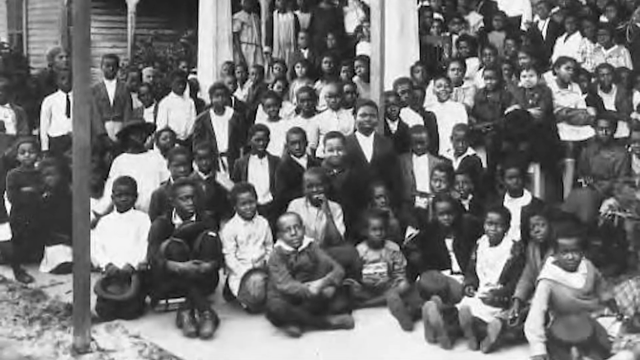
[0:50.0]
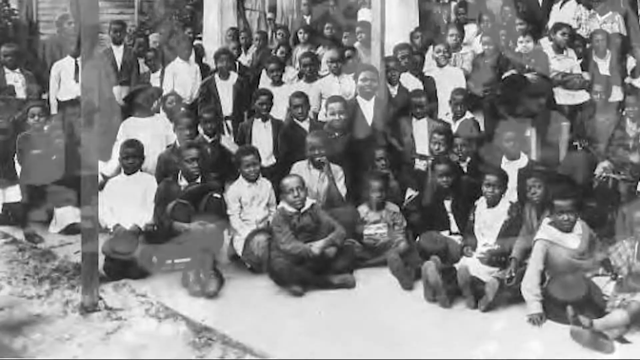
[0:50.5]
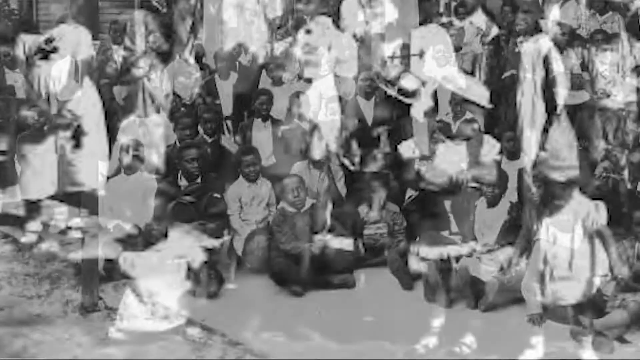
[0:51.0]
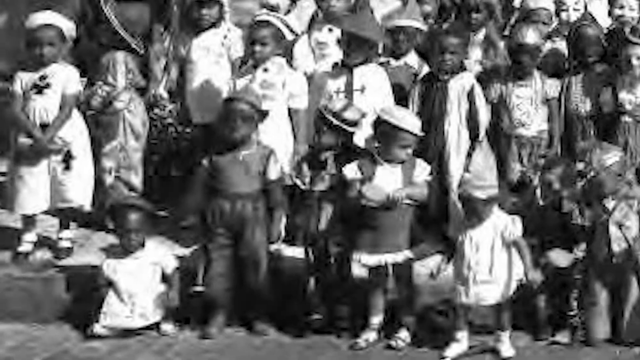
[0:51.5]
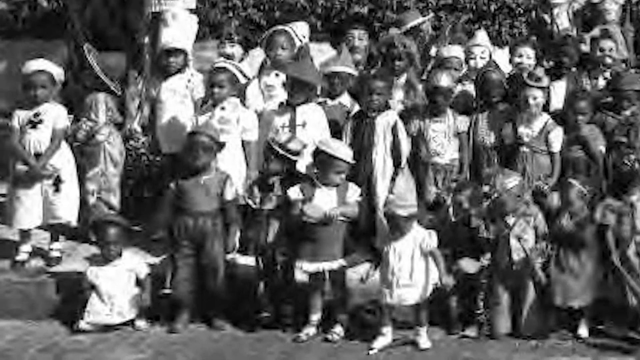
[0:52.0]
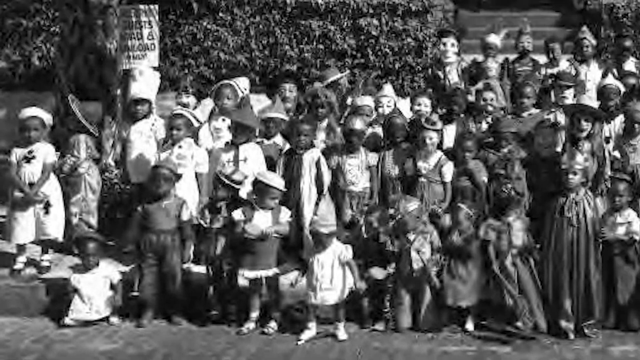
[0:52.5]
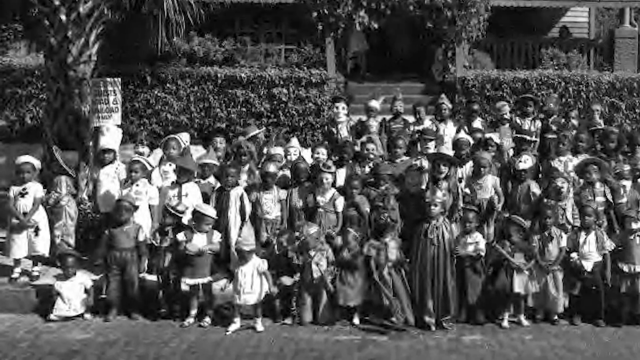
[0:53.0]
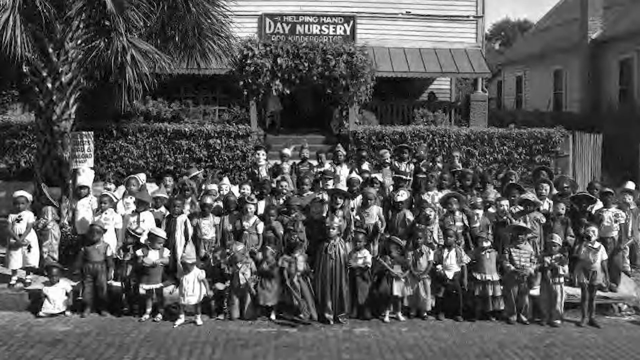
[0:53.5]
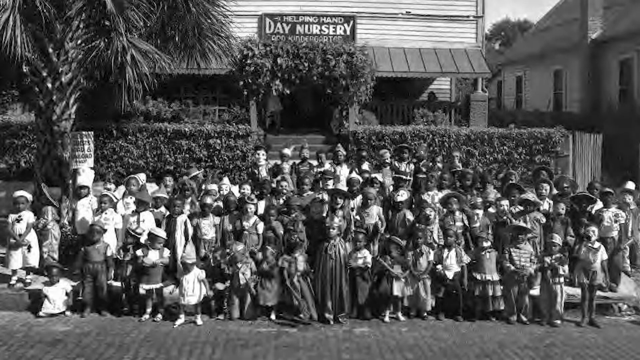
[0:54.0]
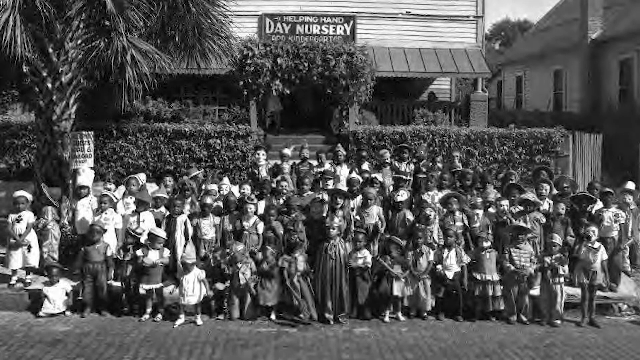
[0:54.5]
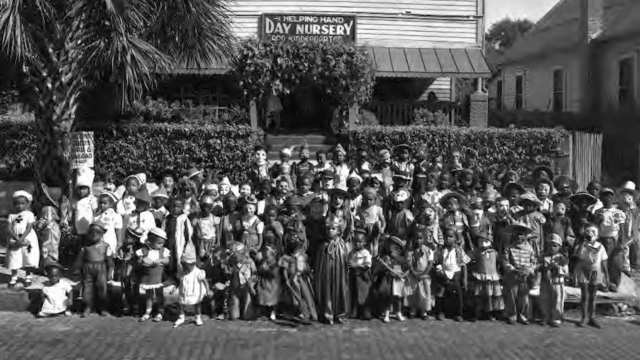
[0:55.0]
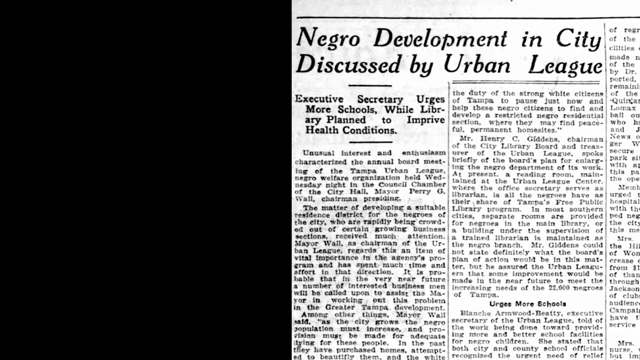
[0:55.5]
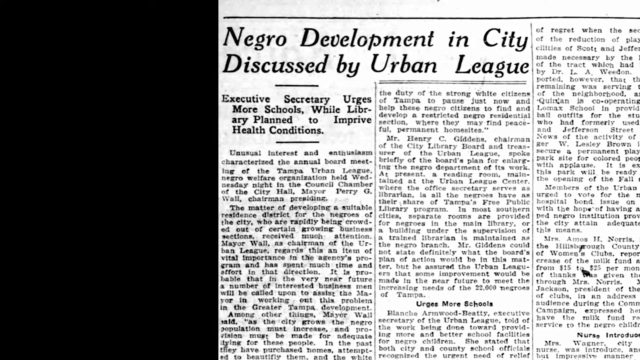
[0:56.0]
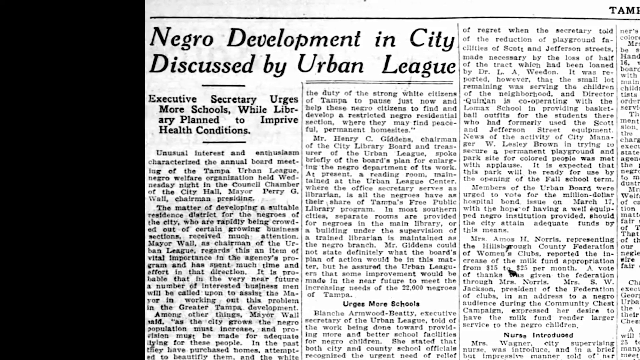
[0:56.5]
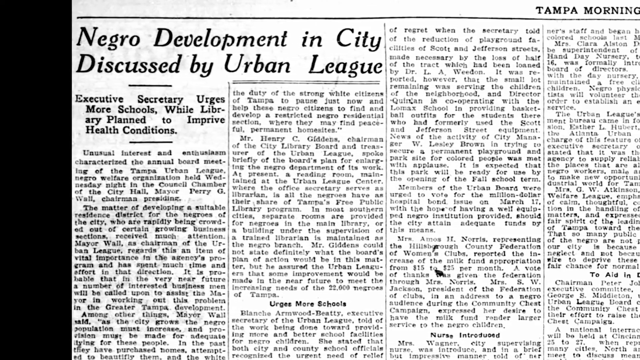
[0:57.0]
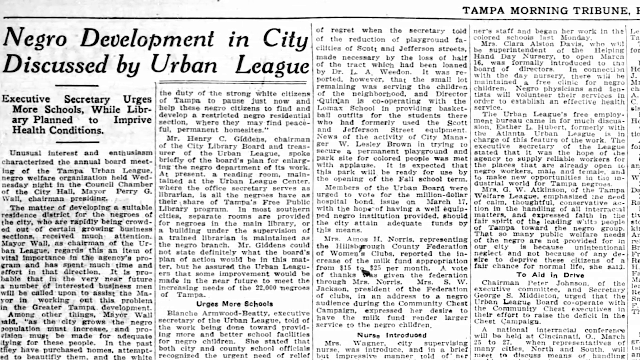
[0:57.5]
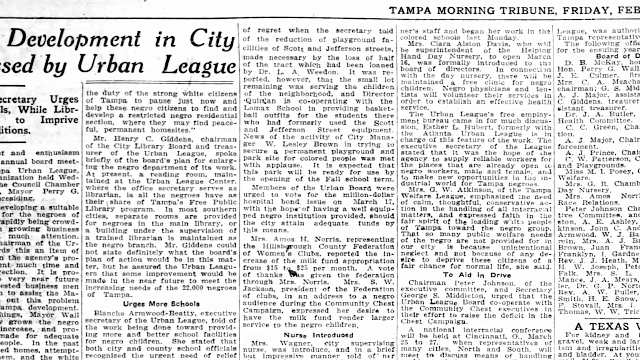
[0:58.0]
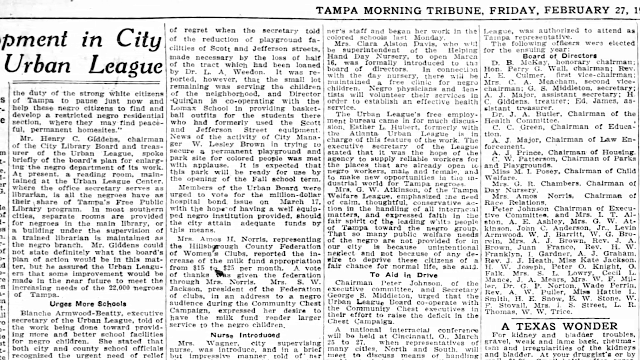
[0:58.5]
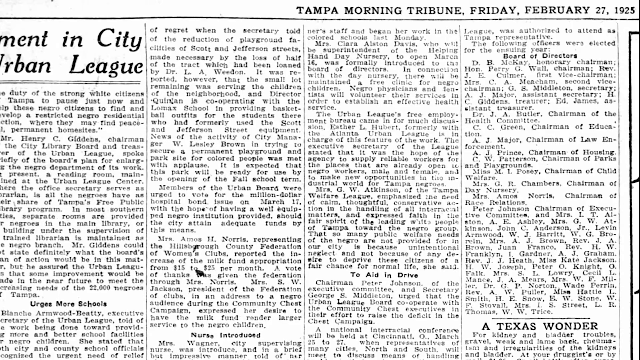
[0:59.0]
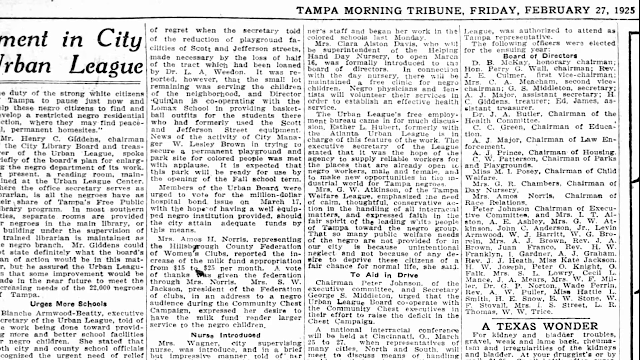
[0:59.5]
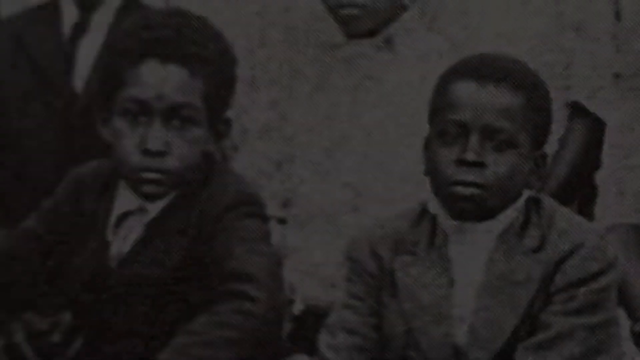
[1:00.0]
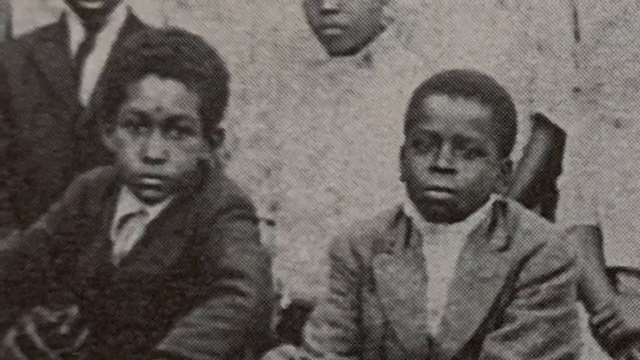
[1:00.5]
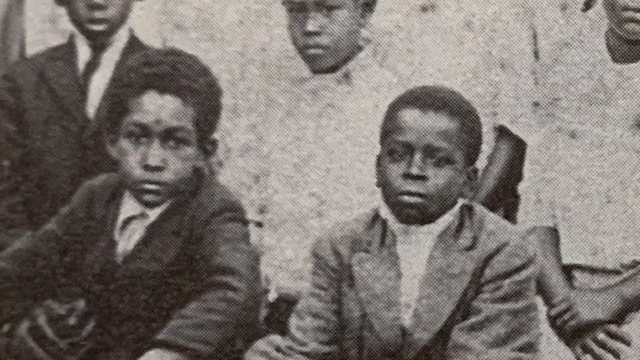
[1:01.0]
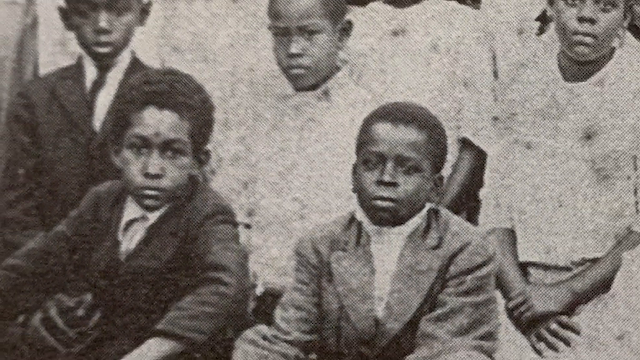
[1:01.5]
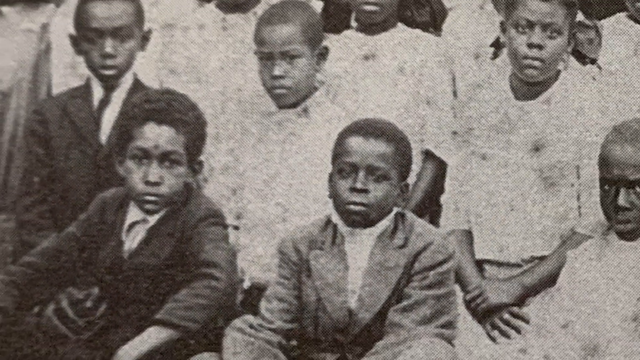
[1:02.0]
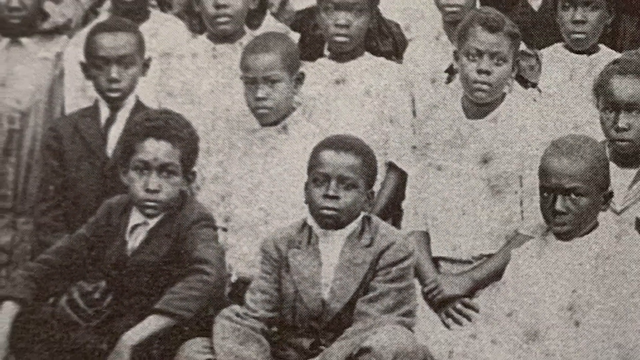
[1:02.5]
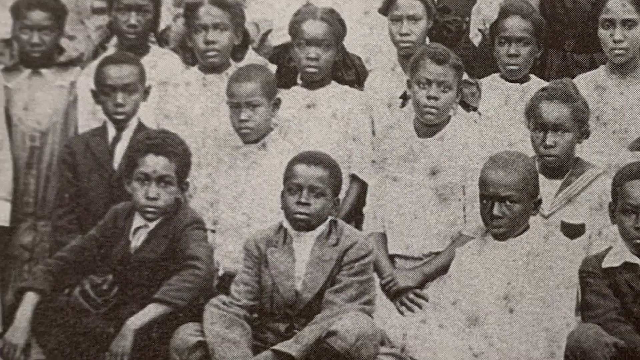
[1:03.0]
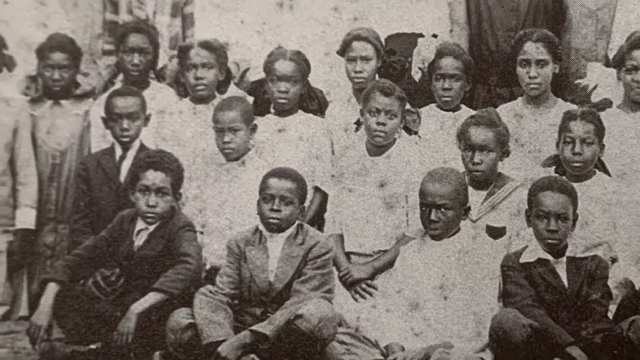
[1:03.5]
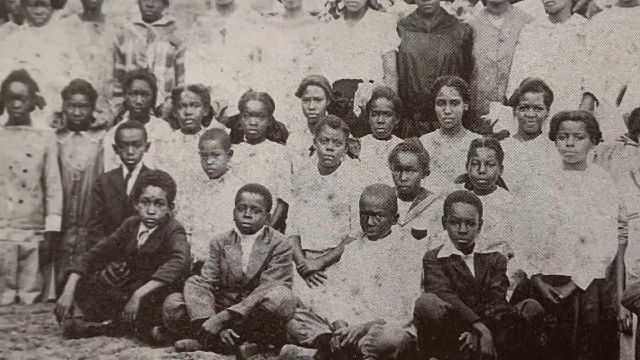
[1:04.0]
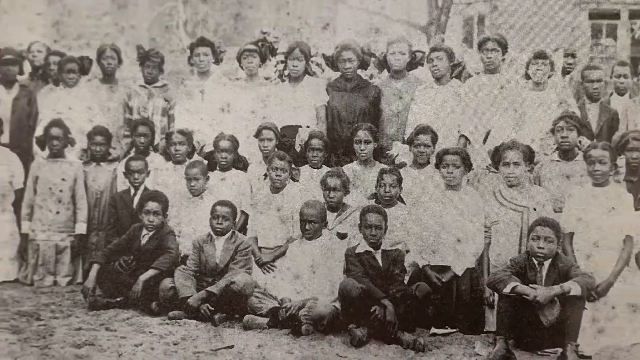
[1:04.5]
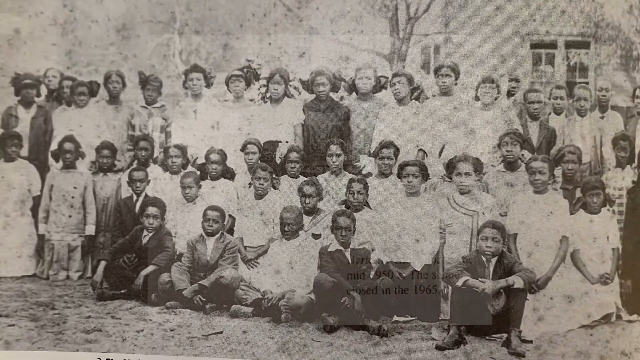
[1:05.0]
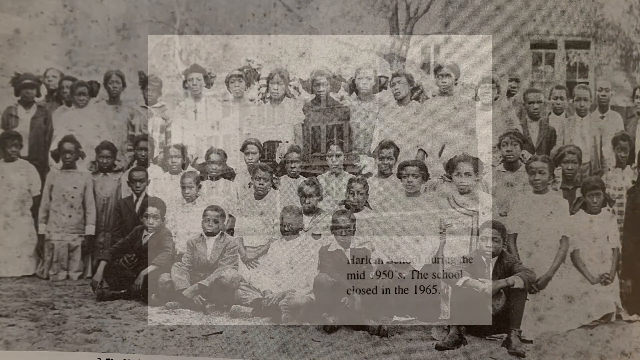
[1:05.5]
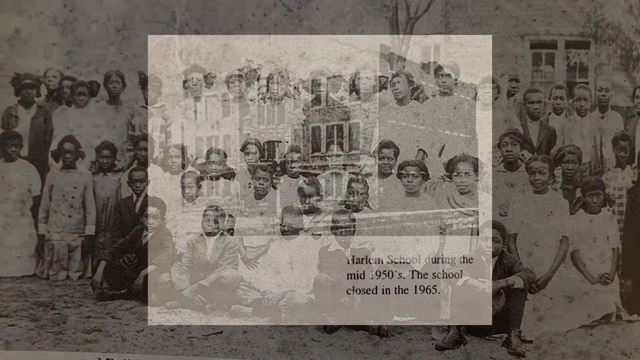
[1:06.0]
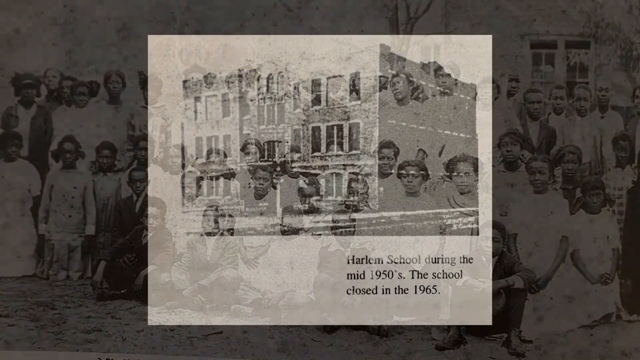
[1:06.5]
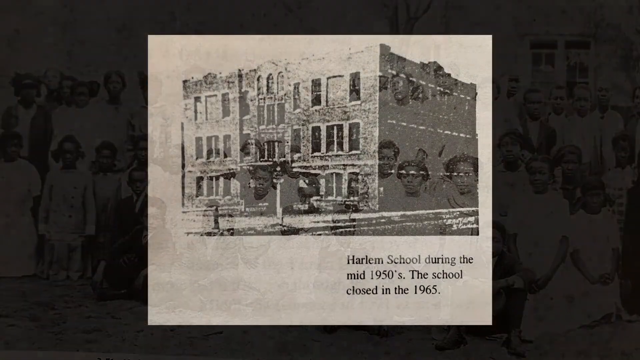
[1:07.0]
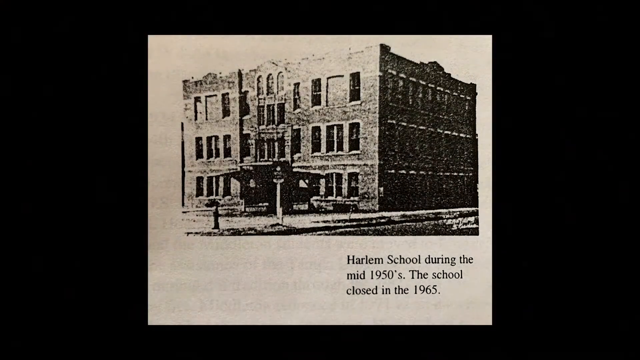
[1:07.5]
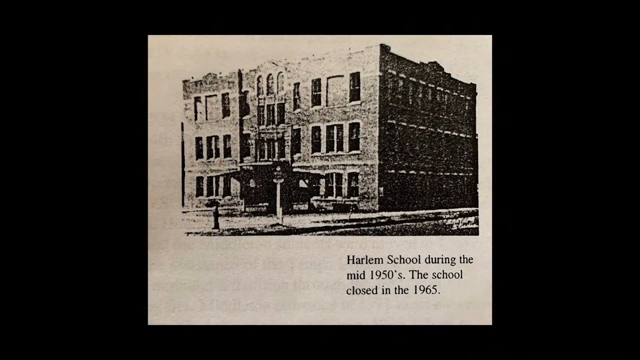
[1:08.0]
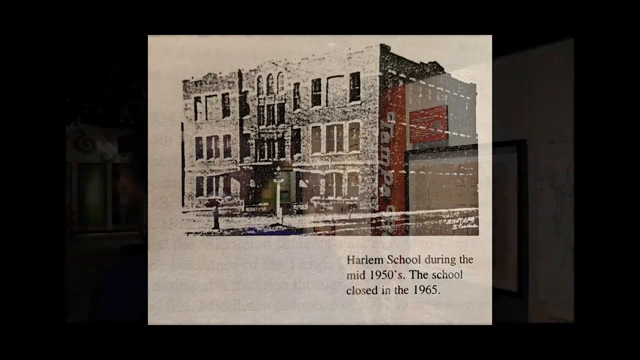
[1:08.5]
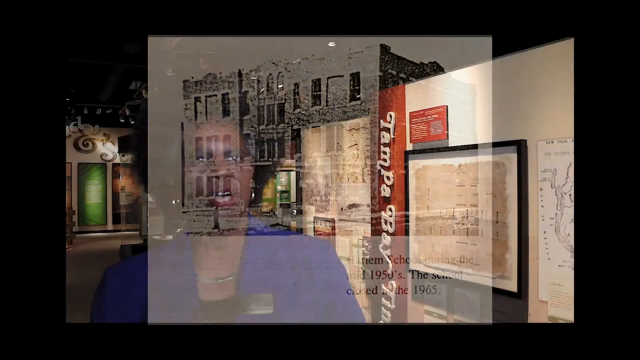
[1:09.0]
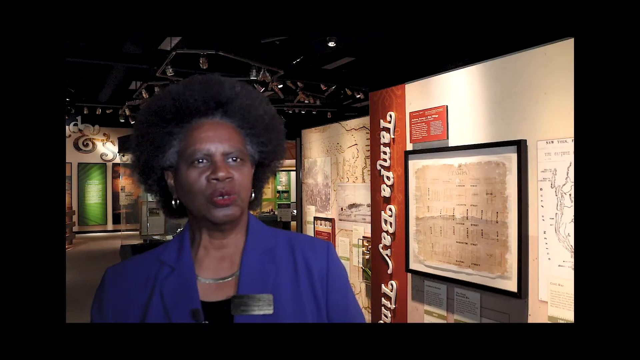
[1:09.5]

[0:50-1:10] The Helping Hand Day Nursery appears, with quite a few little kids standing in front of it in their little hats and cute little outfits. Another headline from the Tampa Morning Tribune reads "Negro Development and City Discussed by Urban League." Next, a black-and-white picture shows quite a few young boys and girls just sitting. A black-and-white image of what looks to be a brick three-story building with an entrance in the front follows; it says "Harlem School during the mid-1950s," and notes that the school closed in 1965. Ersula Odom is then seen speaking again from the museum; she is the speaker throughout.